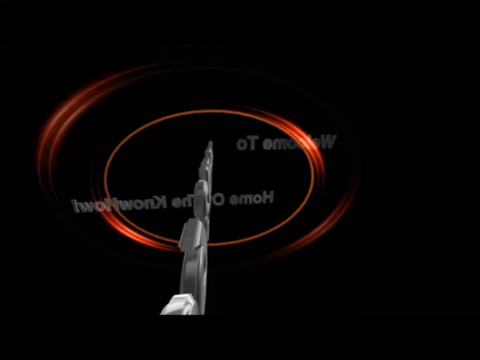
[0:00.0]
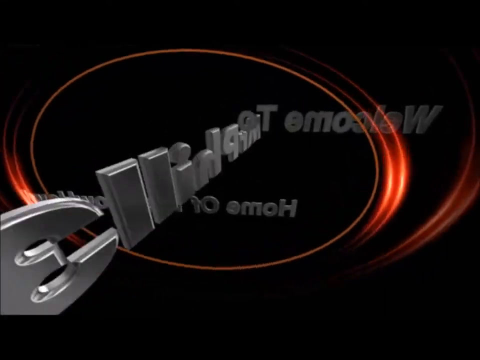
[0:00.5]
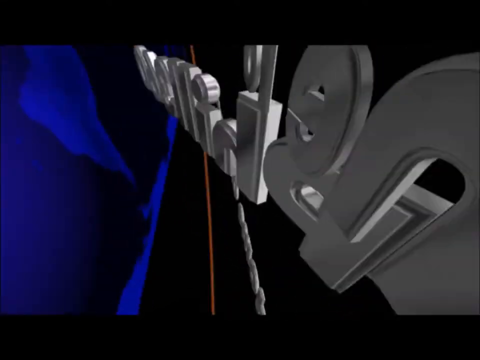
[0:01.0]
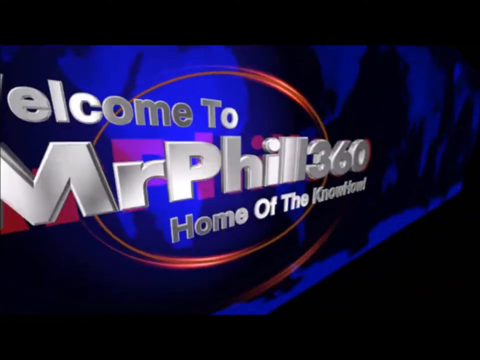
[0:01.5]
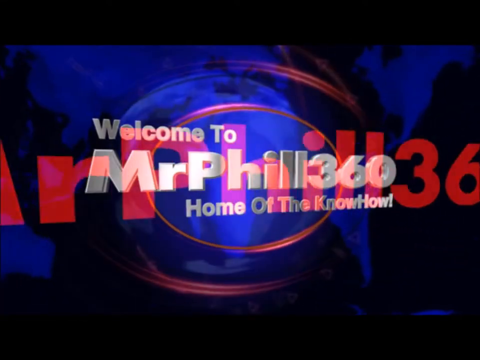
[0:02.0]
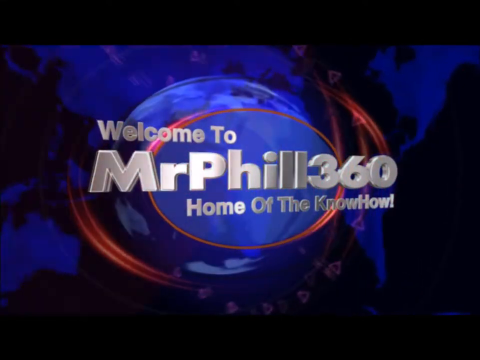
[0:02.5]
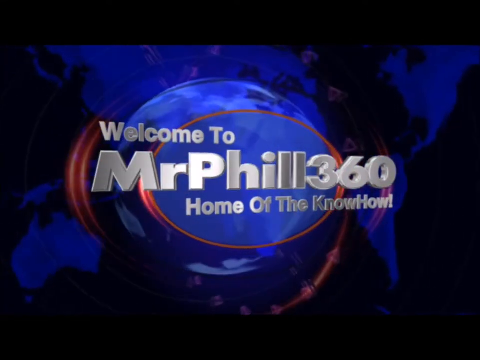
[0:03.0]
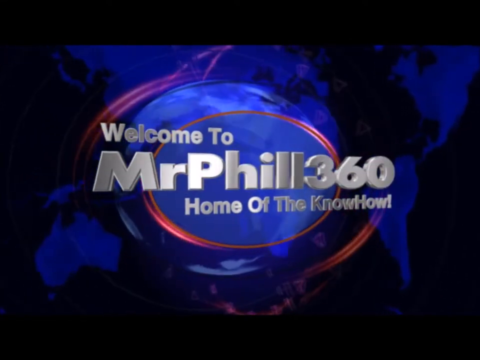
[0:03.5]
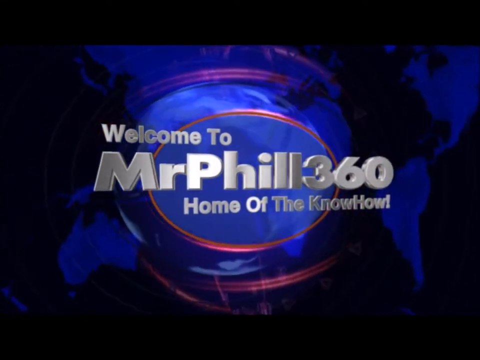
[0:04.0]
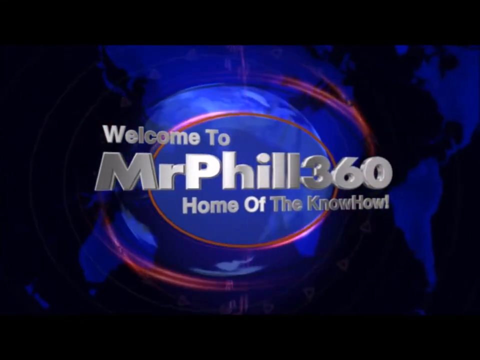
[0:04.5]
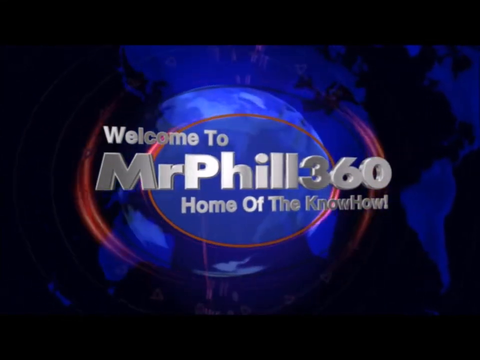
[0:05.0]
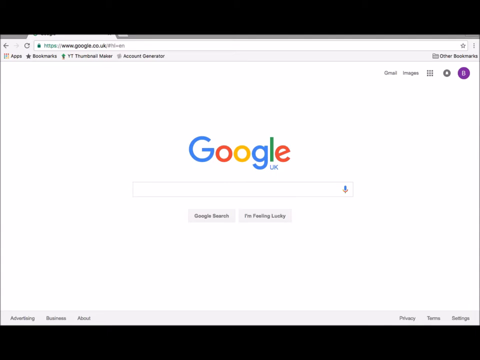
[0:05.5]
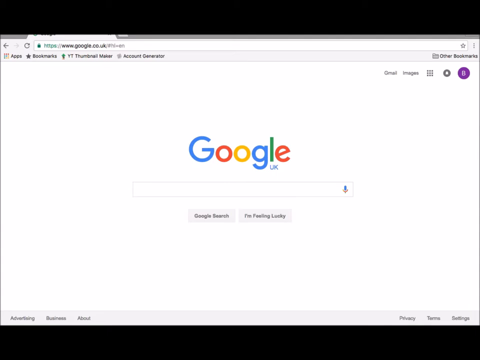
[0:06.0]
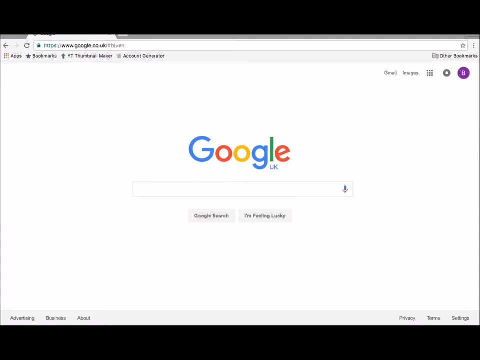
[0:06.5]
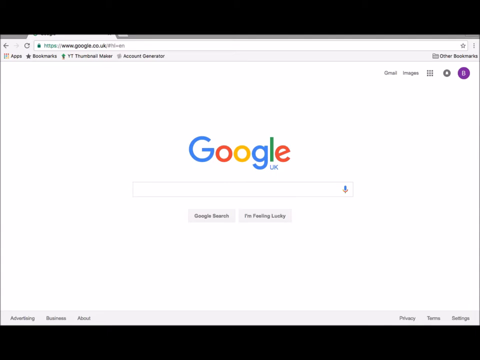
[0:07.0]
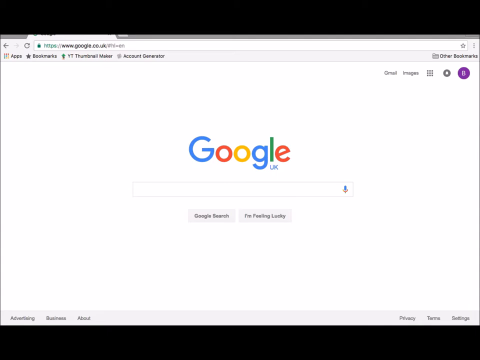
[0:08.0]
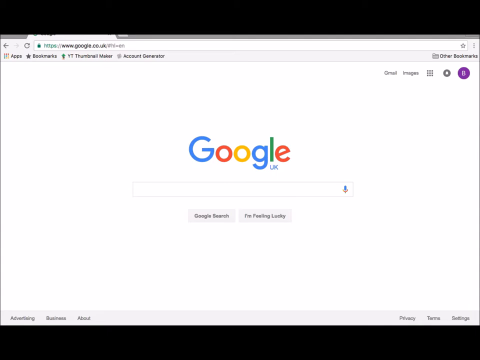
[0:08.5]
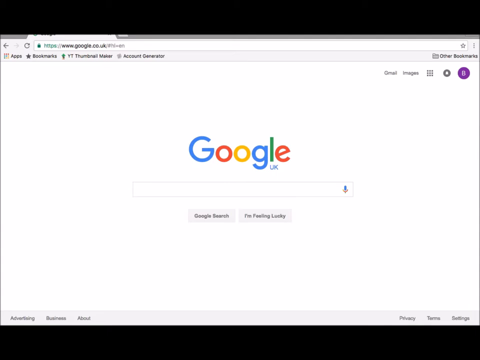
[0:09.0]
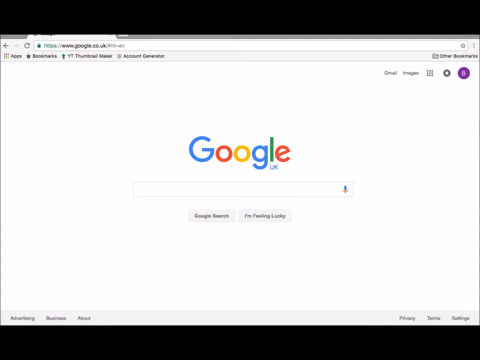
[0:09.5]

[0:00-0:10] An animation of flipping text opens the video. The text reads "Welcome to MrPhill360, home of the knowHow!" and is white and slightly translucent. Behind the text is a blue world map on a black background; the center of the map behind the text is slightly blurred and surrounded by red glowing lines. A Google home screen then appears, with the Google logo in the center and the letters UK underneath it. Below the search bar are two buttons that say "Google search" and "I'm feeling lucky."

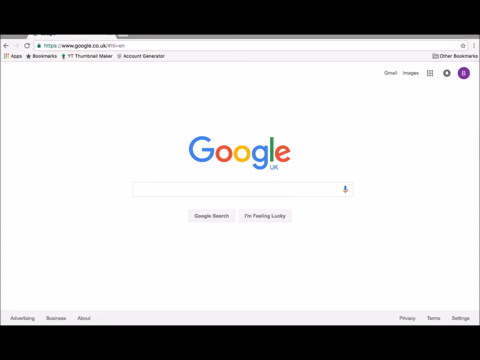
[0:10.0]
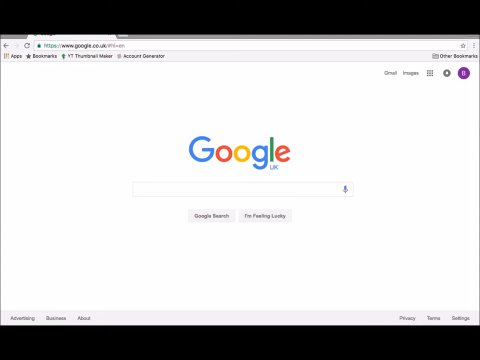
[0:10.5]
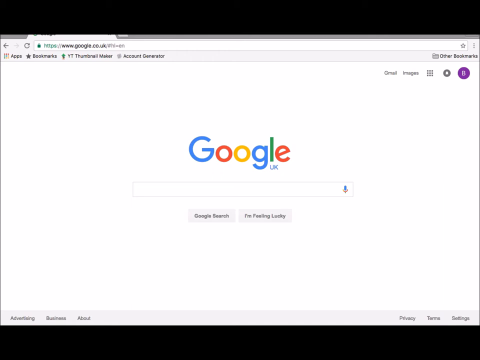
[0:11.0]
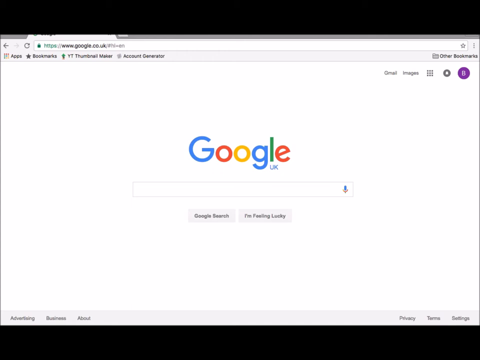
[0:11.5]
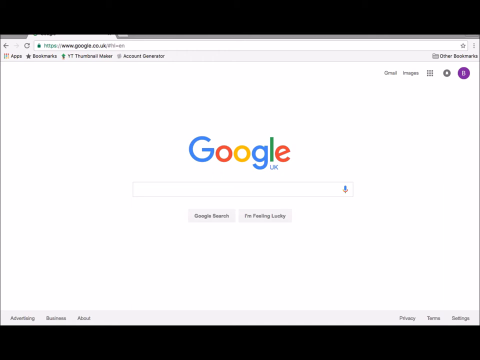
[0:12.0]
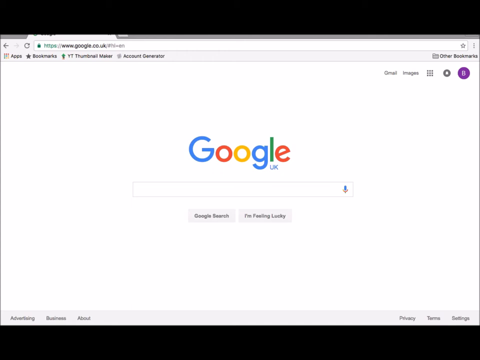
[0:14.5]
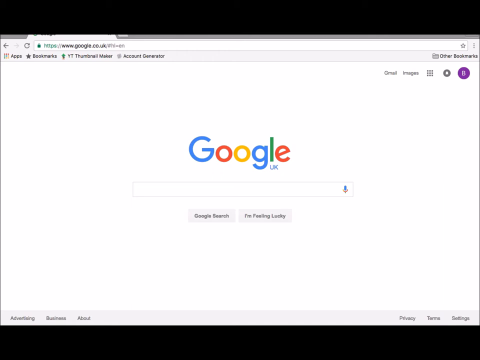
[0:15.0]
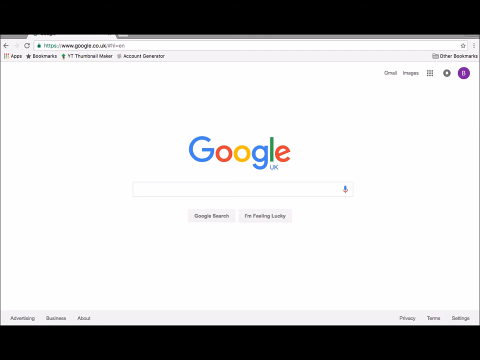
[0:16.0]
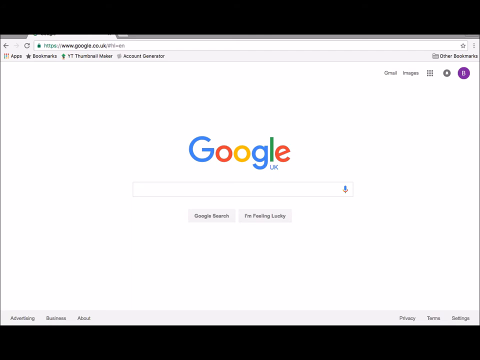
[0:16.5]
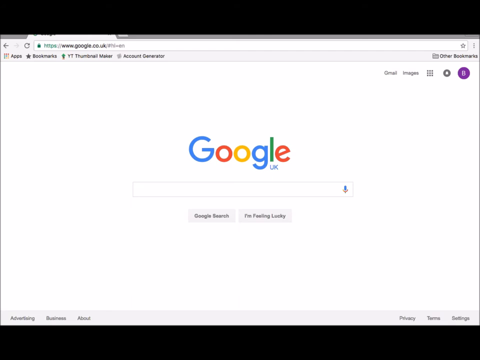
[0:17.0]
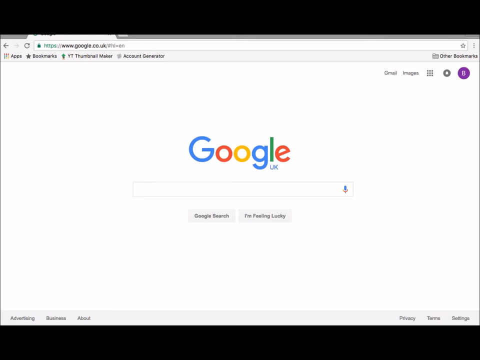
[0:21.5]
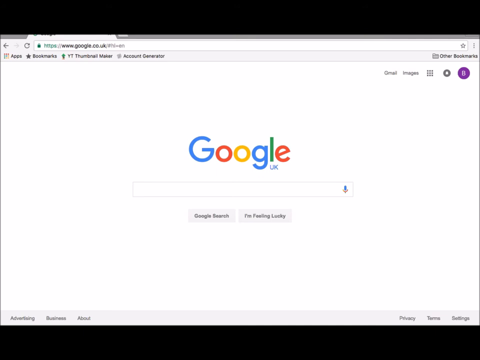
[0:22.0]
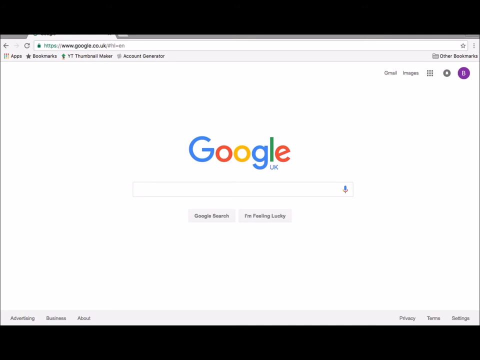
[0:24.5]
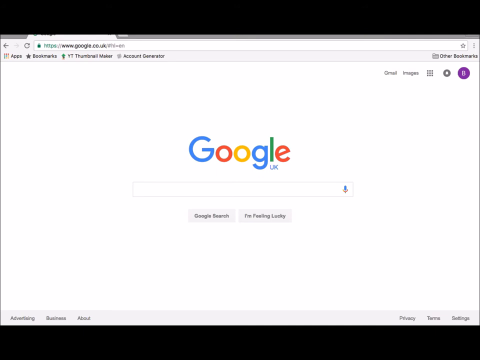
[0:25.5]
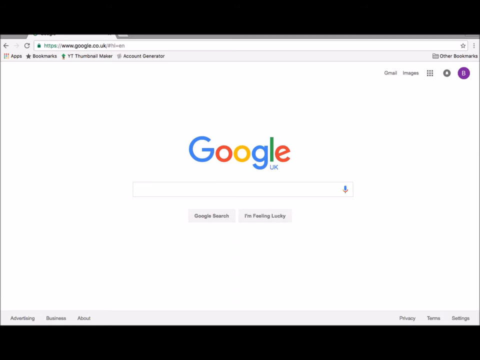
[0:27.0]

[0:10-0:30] The Google home page stays unchanged and nothing is searched. Six hyperlinks run along the bottom of the page, three on the left and three on the right: the left ones say "advertising," "business," and "about," and the right ones say "privacy," "terms," and "settings." In the top right of the page, the initial B appears near the settings icon, for the user's profile. Nothing is bookmarked, but there is a bookmarks button underneath the link typed in the browser. To the left of the bookmarks button is an apps button, and to its right are a thumbnail maker link and an account generator link. A microphone is in the search bar on the right.